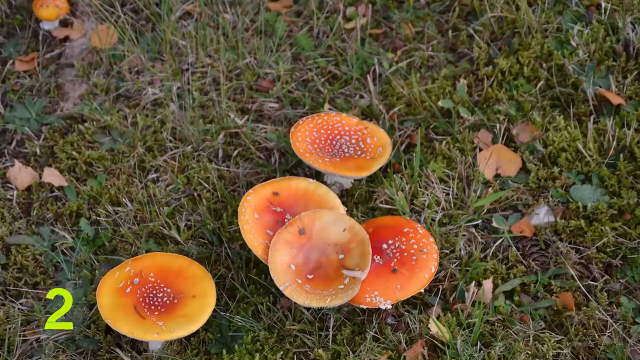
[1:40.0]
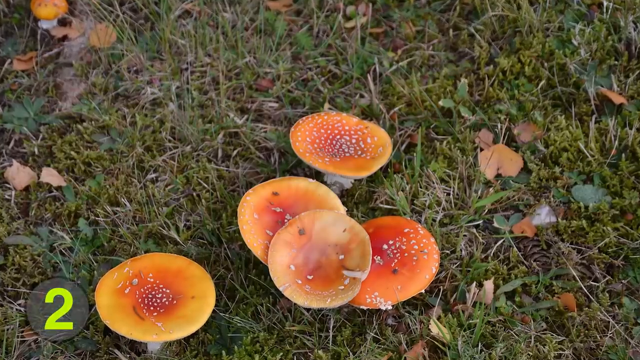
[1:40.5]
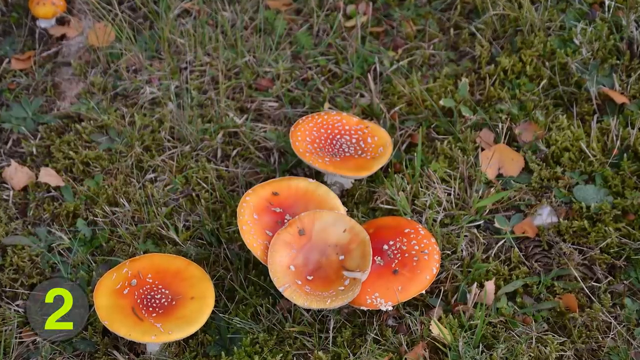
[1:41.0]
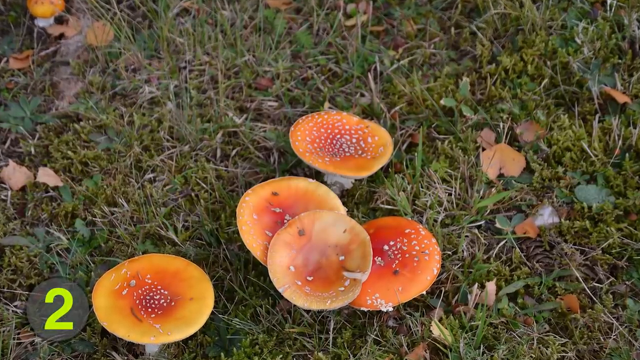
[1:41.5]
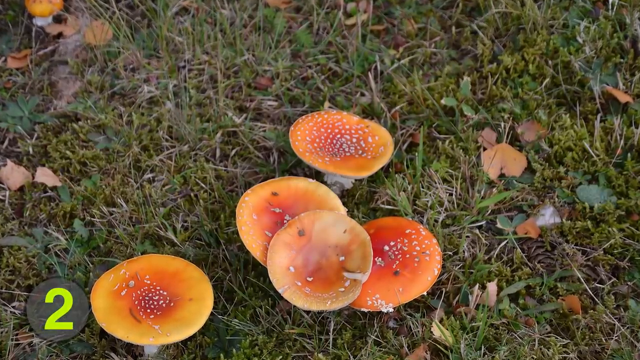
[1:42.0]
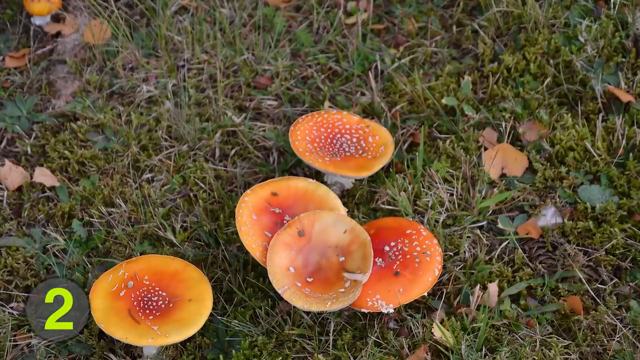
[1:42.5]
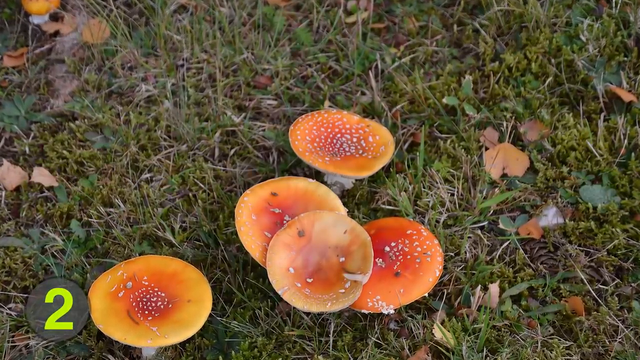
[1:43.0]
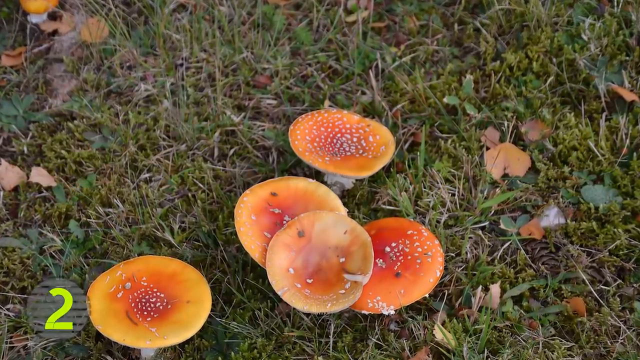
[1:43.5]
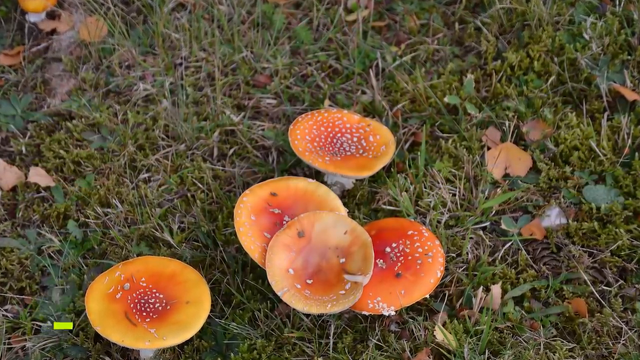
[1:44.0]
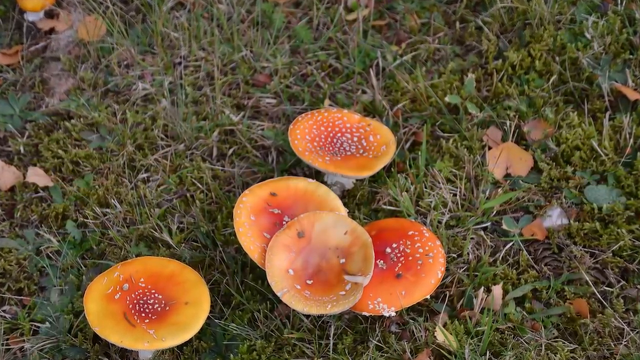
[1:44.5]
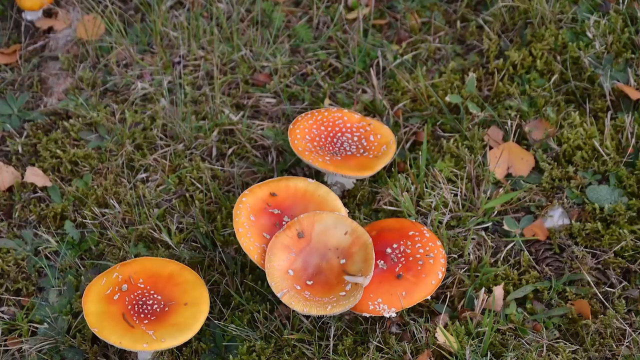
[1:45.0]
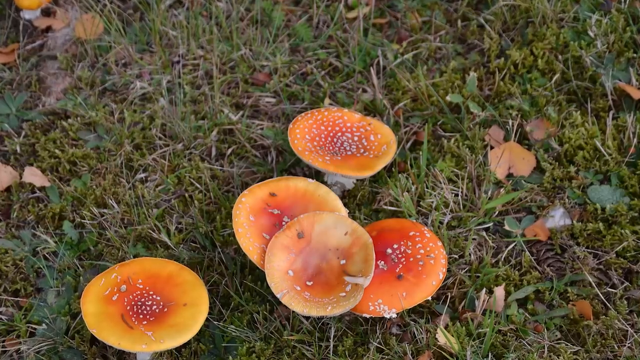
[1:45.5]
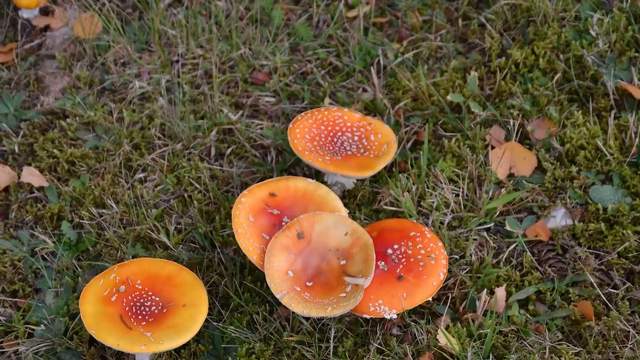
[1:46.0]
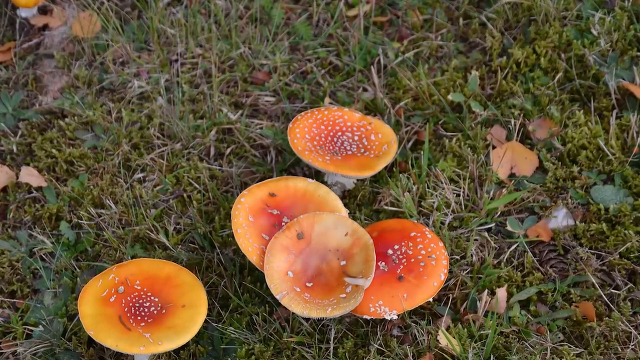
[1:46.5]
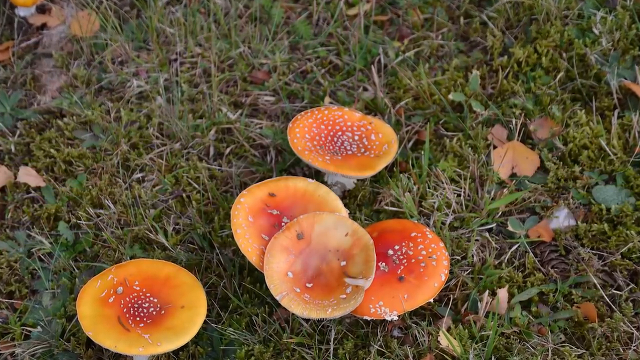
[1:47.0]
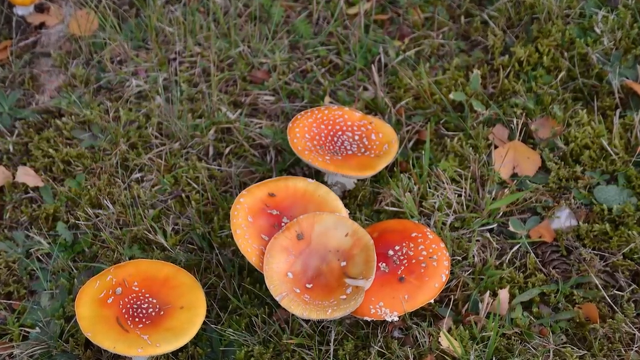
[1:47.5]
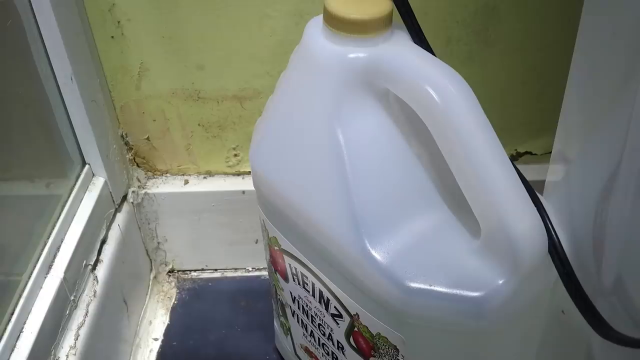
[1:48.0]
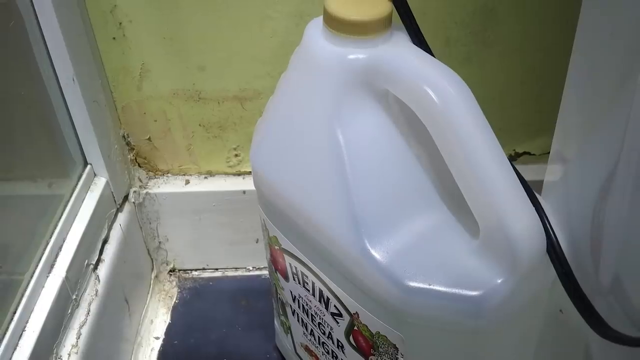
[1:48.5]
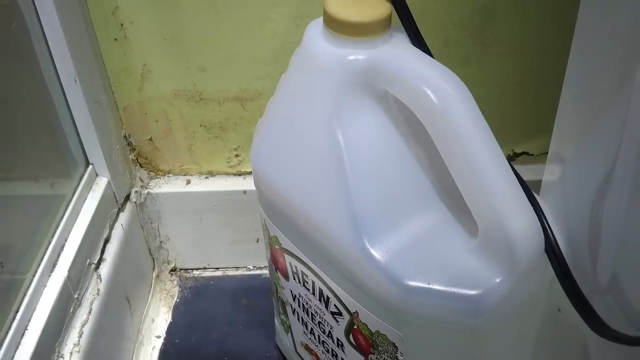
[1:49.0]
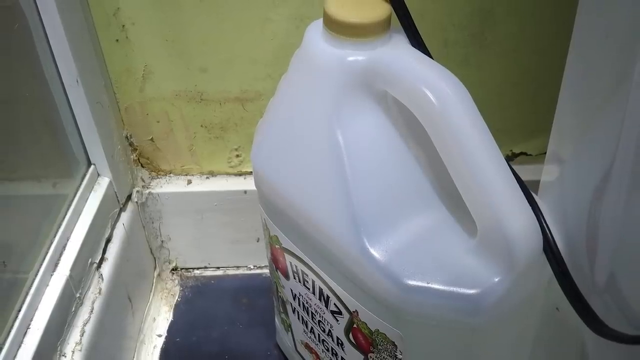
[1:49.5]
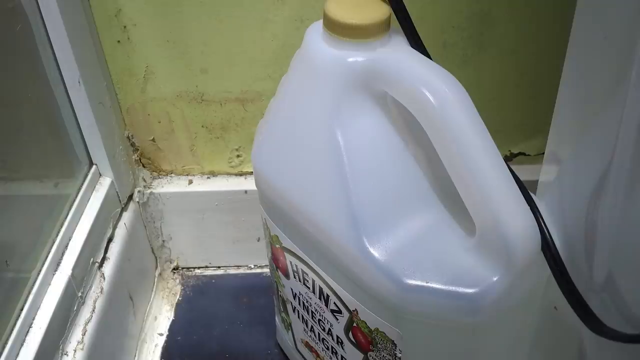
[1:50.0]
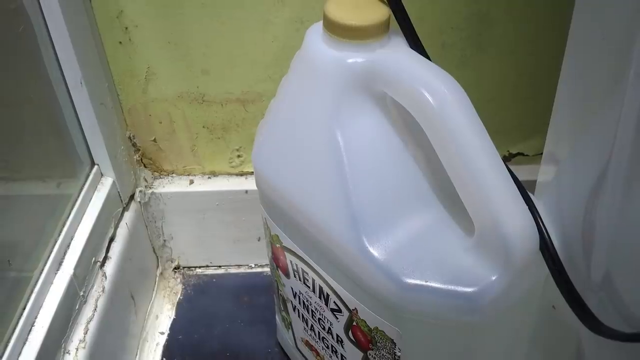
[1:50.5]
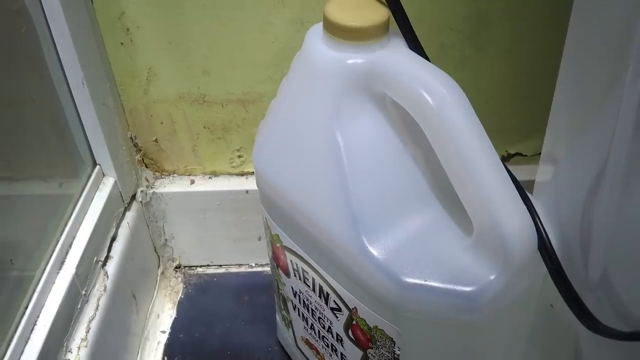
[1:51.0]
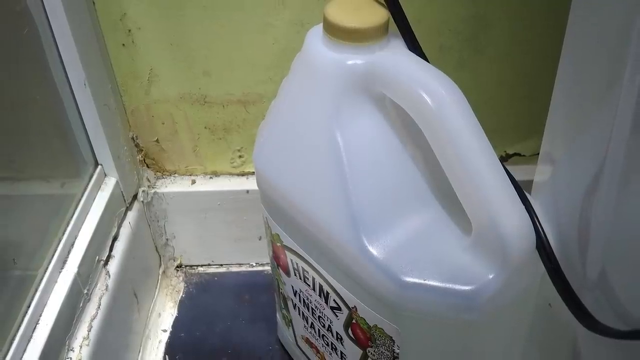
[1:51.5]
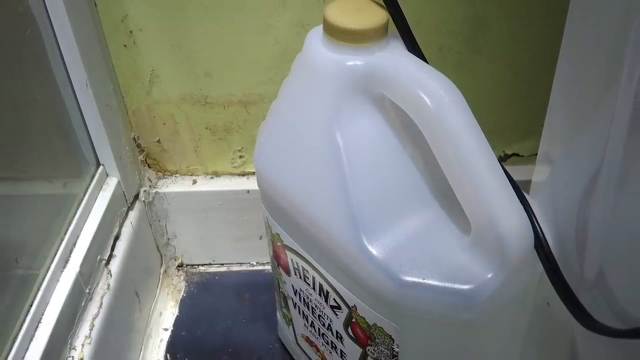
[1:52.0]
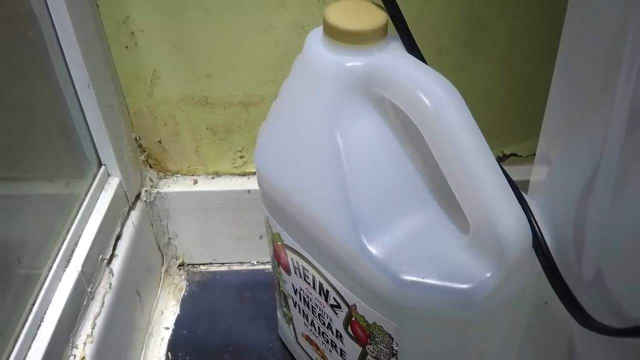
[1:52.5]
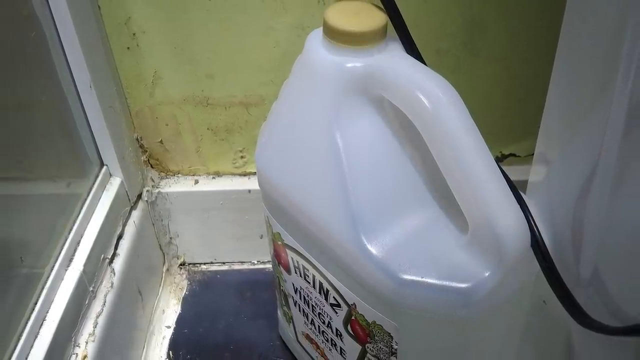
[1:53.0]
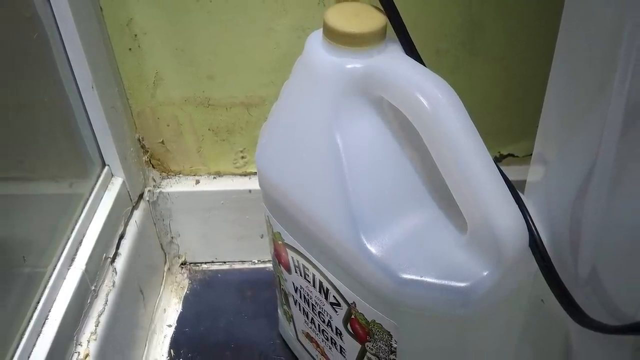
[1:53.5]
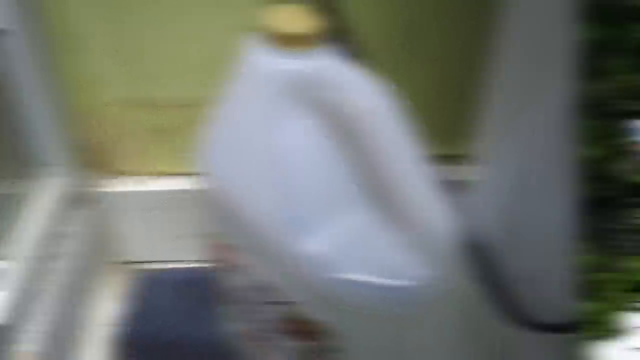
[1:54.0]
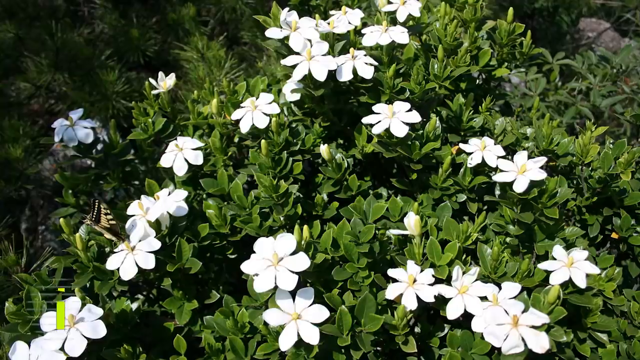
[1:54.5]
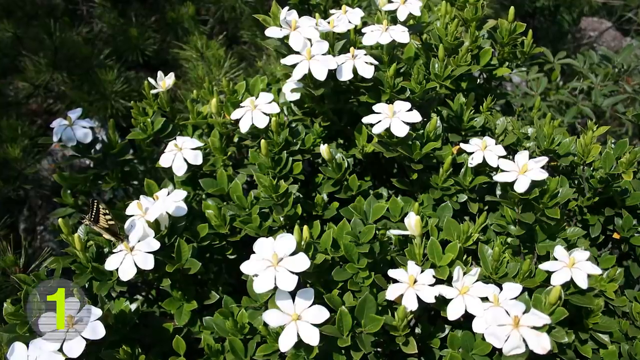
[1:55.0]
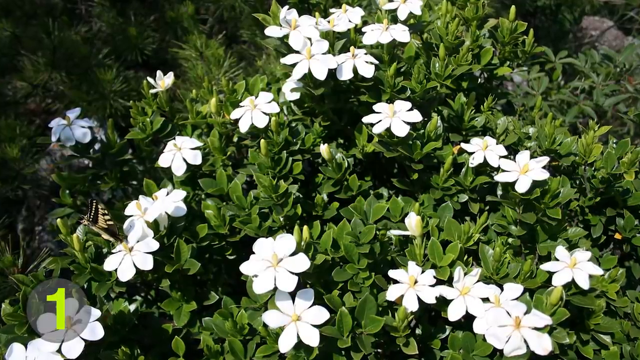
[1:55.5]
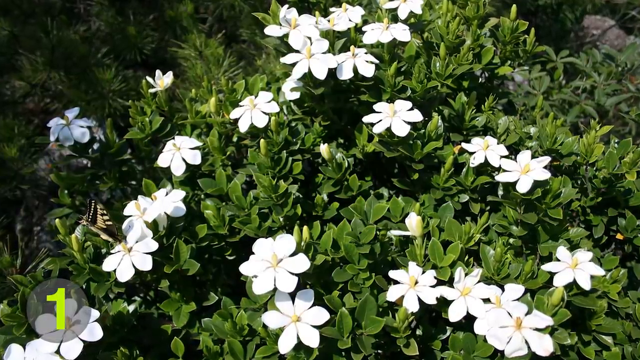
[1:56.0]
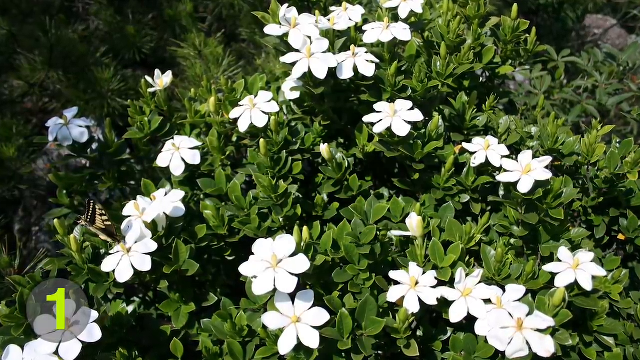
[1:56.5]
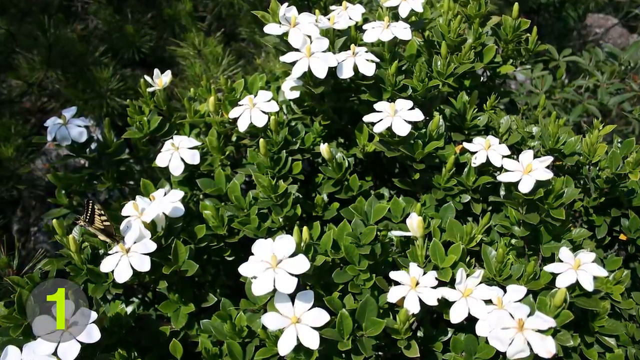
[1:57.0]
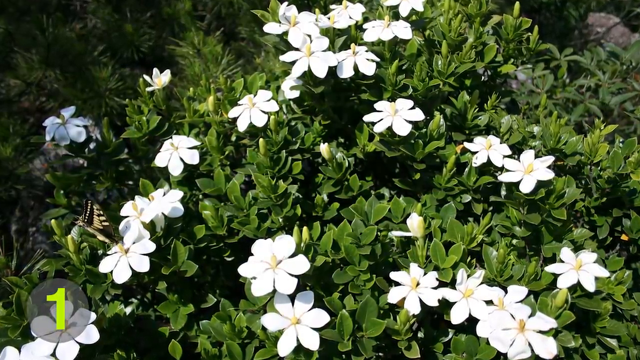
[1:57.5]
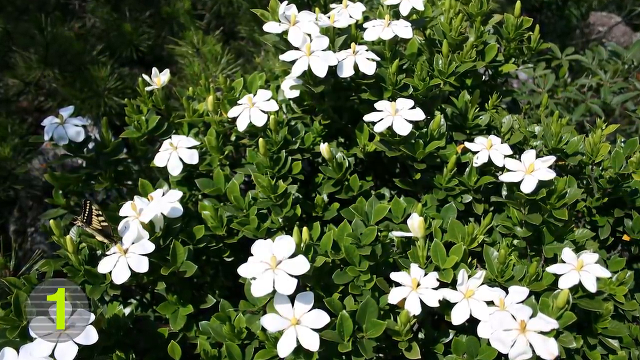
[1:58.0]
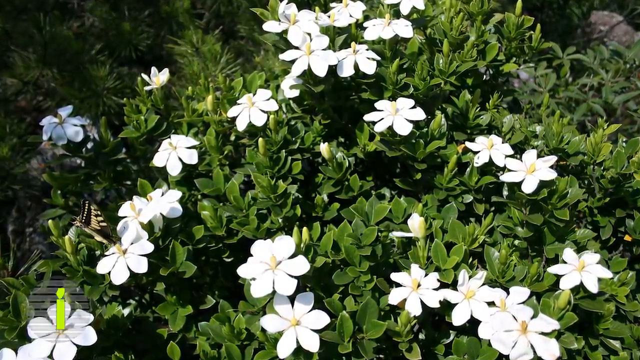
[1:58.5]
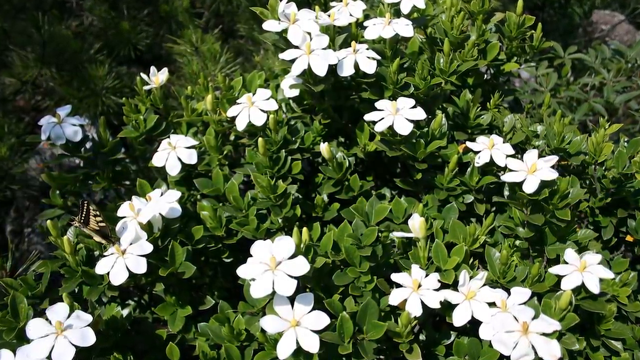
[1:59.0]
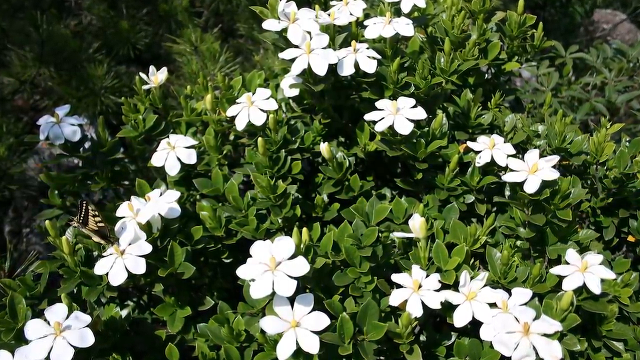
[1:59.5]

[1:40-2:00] Five mushrooms are on the ground, surrounded by green grass. They are quite tall and large at the head, with orange heads and white spots on top. The shot cuts to the Heinz pure white vinegar bottle placed in the corner of a room, near the ground, with what looks to be dirty ground around it and what looks to be a window of some sort to its left. The shot then cuts to a field of green plant bushes, surrounded by white flowers, many with six petals.